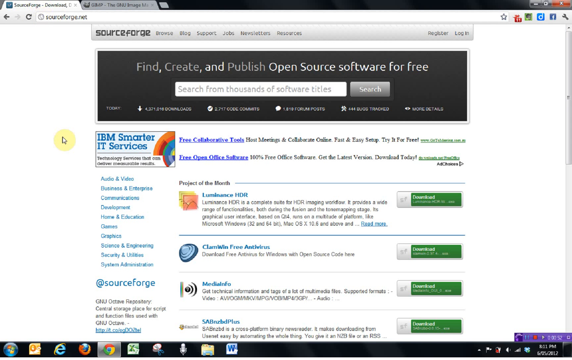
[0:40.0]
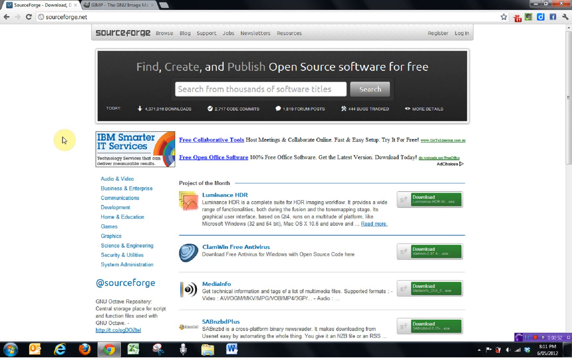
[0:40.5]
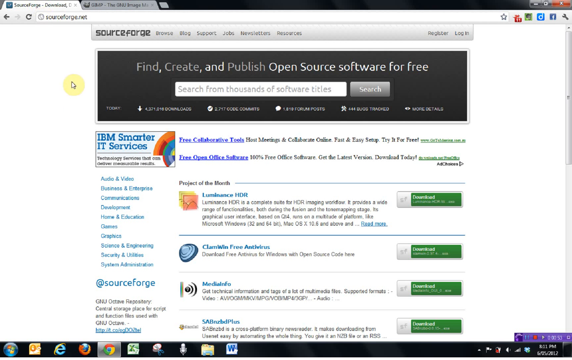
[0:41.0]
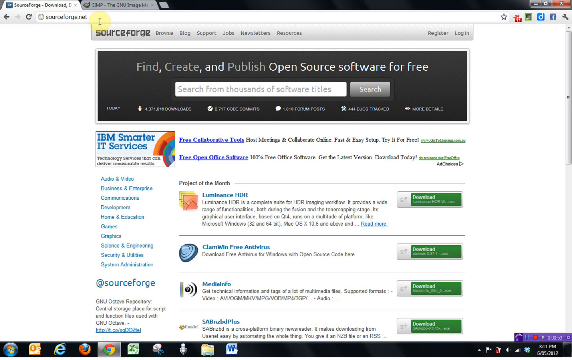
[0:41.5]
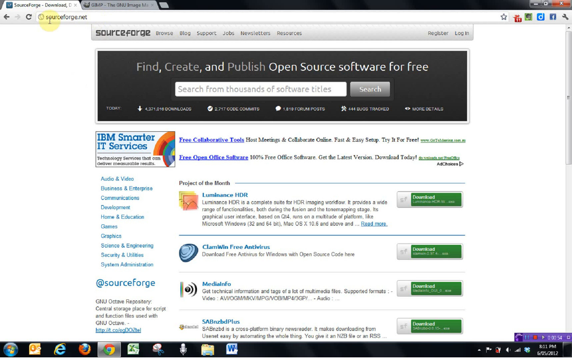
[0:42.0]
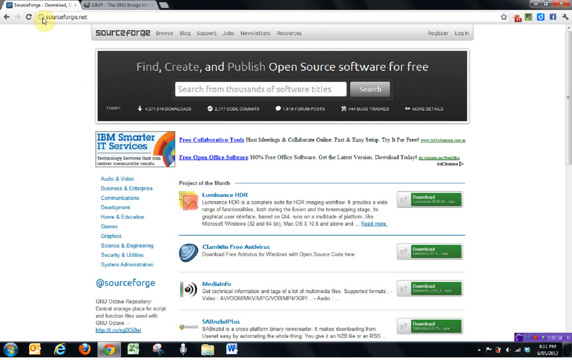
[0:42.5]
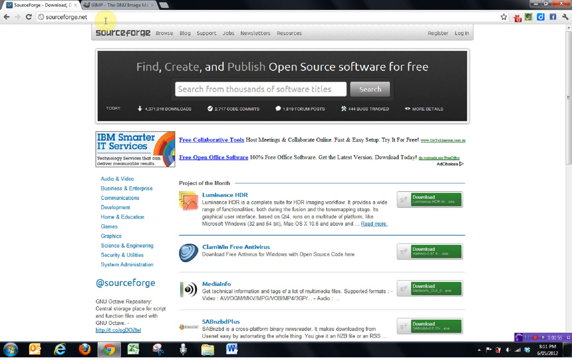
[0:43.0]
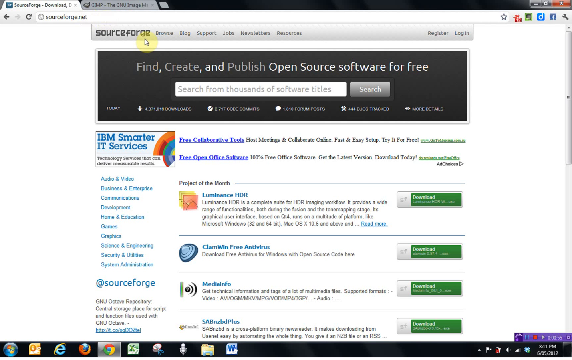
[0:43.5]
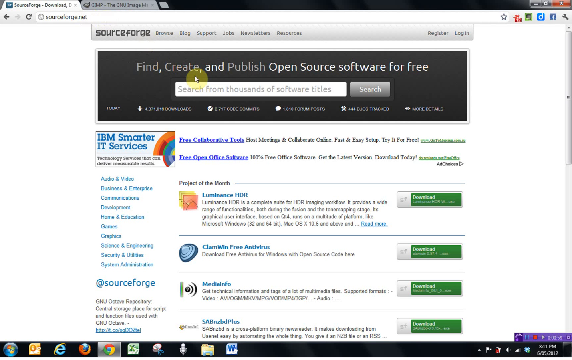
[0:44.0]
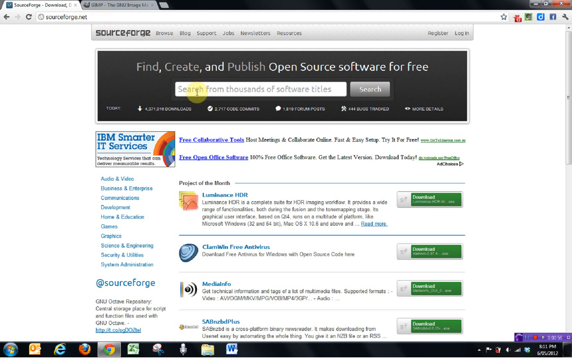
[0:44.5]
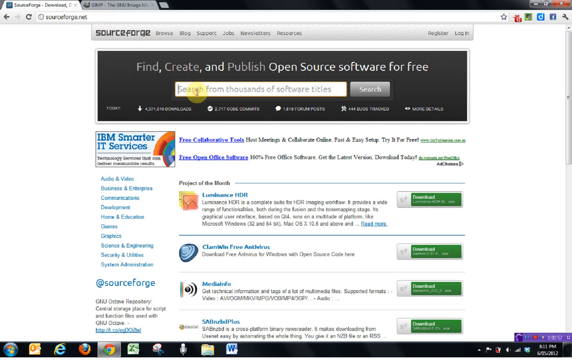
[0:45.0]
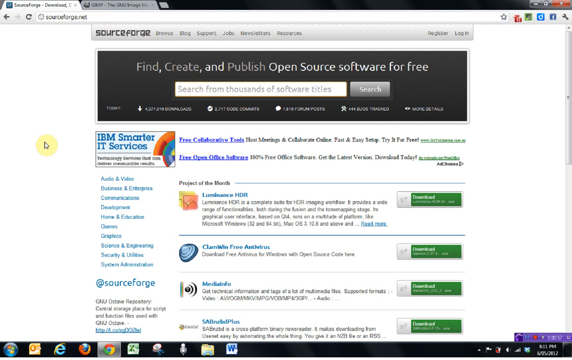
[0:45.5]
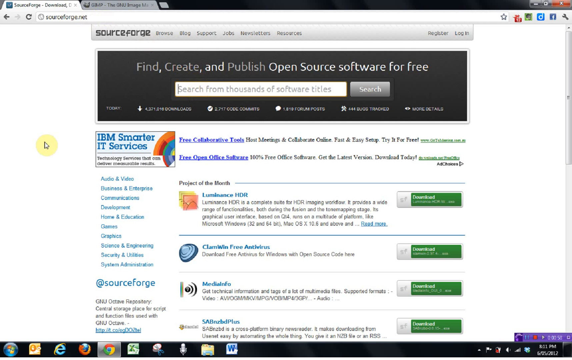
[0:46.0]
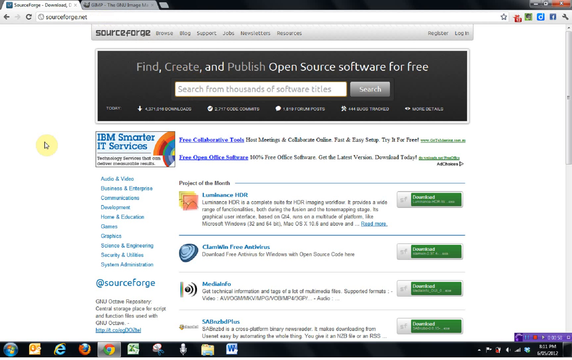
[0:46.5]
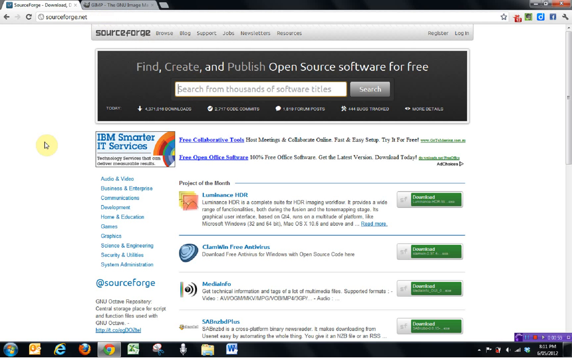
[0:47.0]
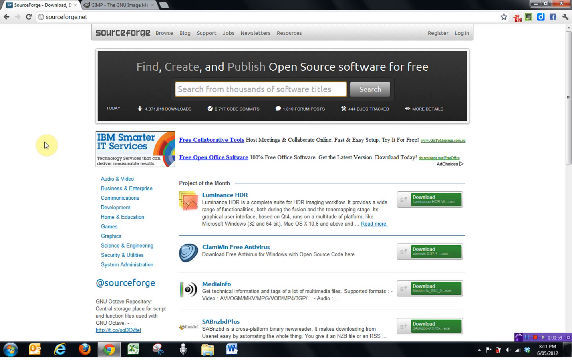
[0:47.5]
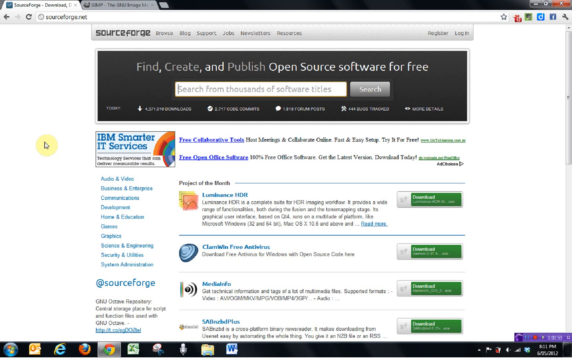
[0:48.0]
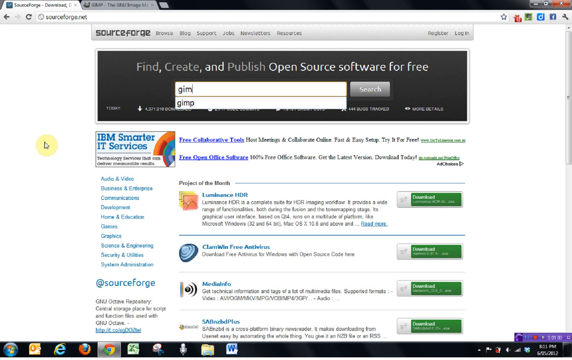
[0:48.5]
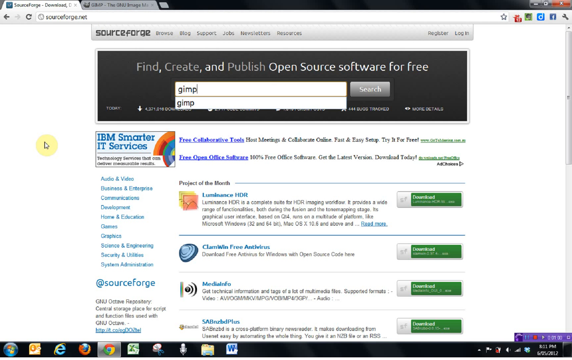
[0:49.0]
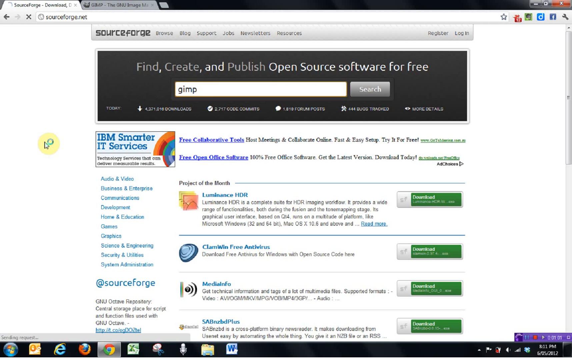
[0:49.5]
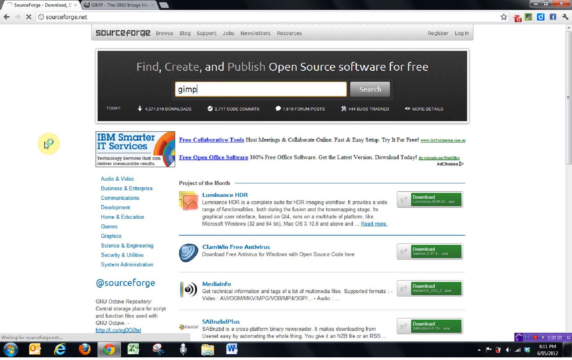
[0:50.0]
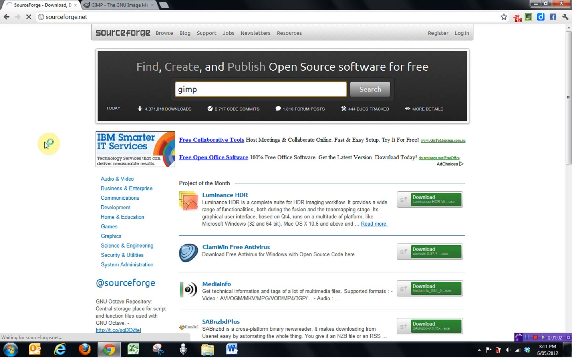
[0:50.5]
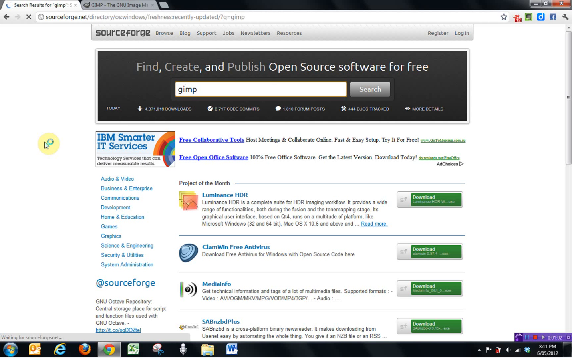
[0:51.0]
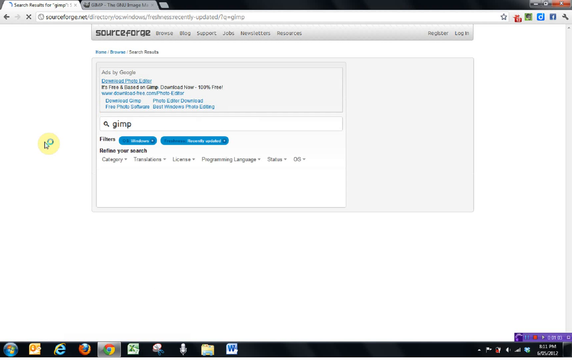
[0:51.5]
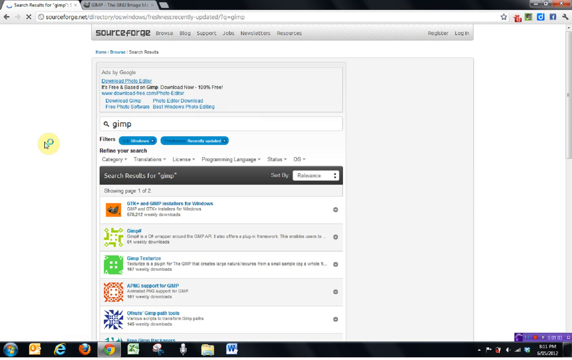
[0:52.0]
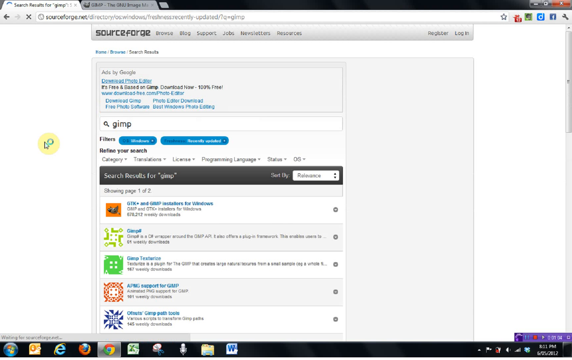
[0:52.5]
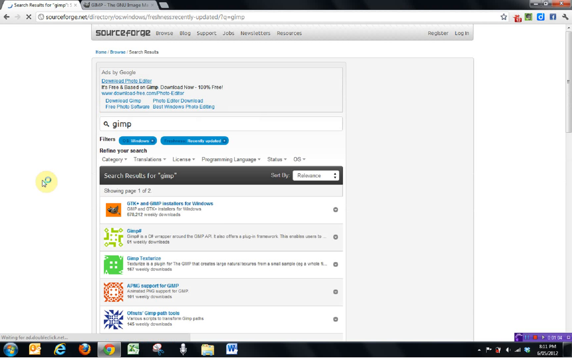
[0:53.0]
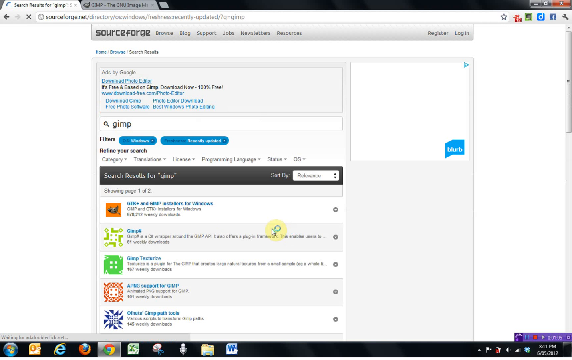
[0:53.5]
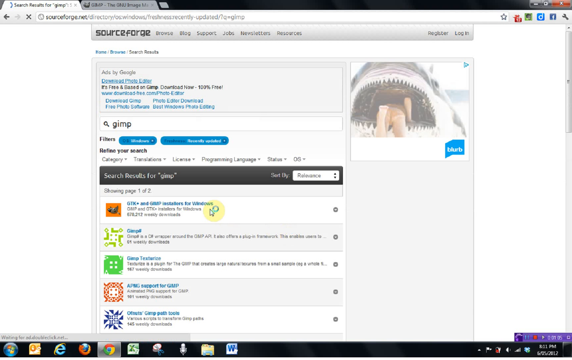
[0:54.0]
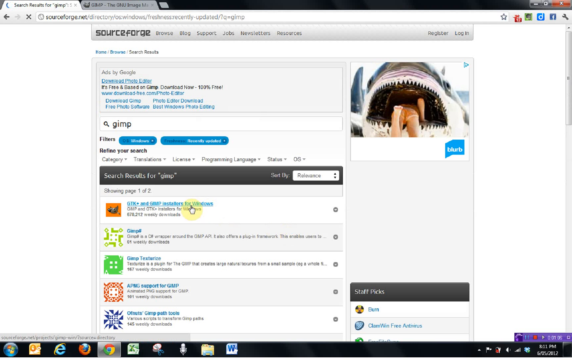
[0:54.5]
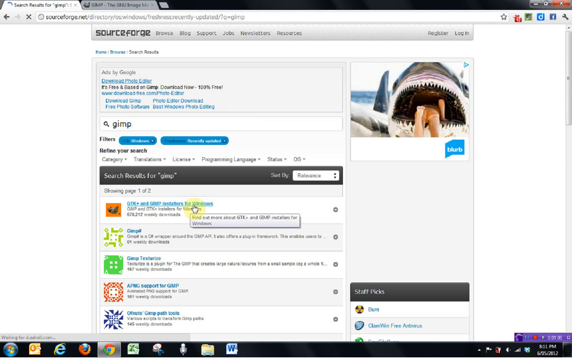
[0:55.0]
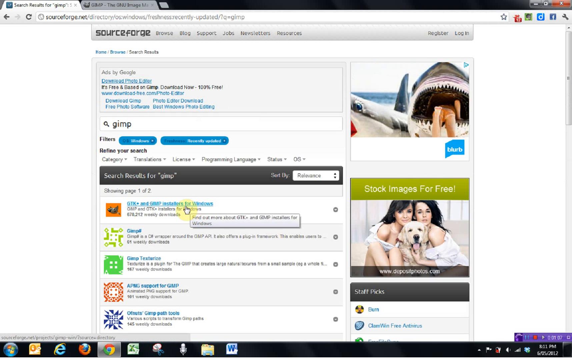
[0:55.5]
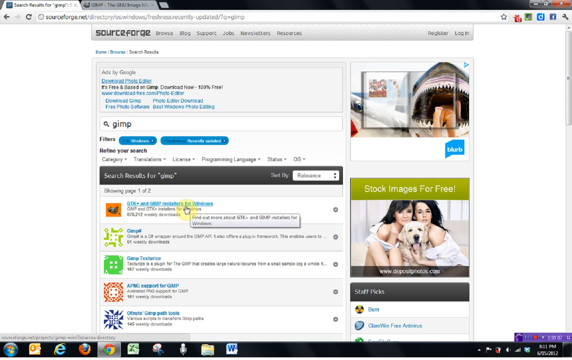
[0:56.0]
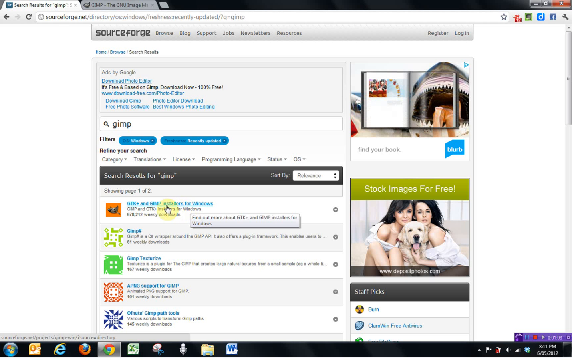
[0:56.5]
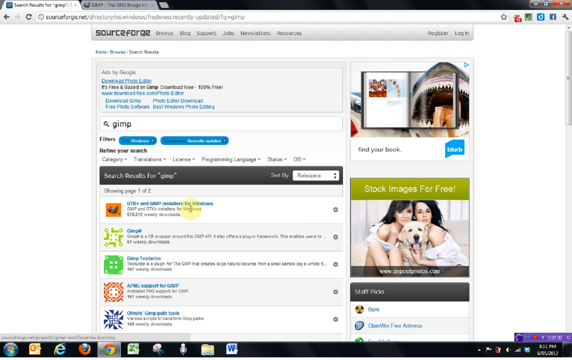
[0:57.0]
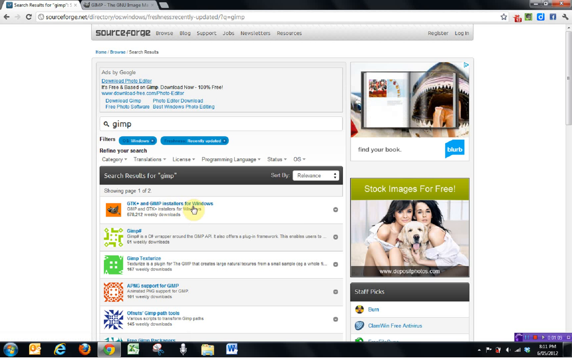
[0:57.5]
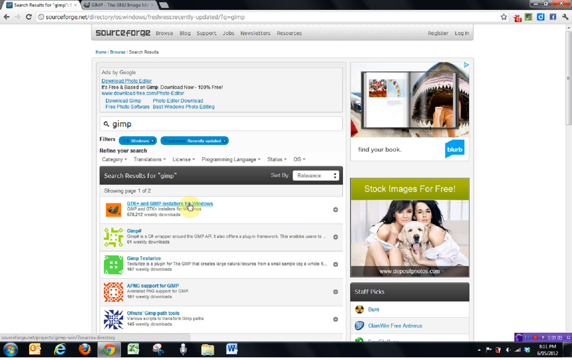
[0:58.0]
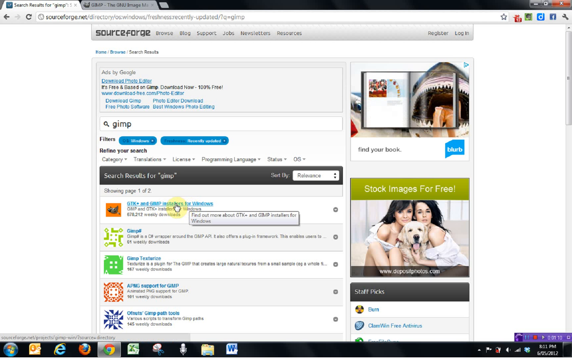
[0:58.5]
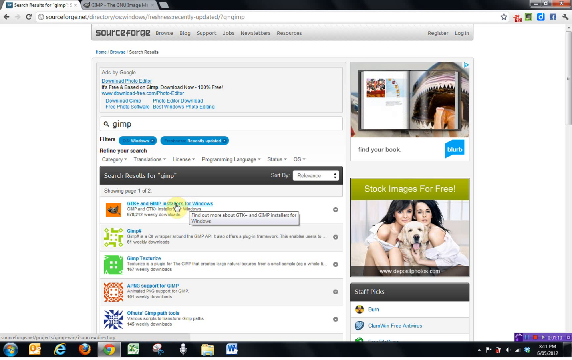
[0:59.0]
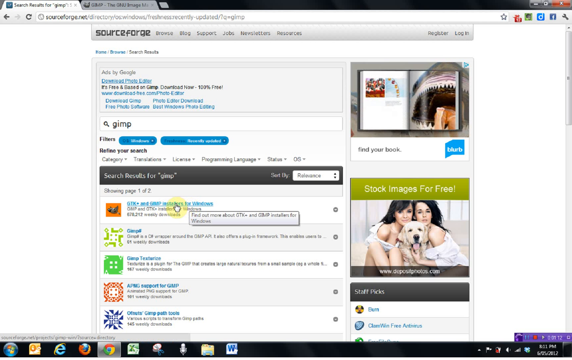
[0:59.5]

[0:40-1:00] The website is SourceForge.net, and its address is shown. The user goes to a search bar at the top, types "GIMP", apparently presses enter, and a results screen comes up. Much of it is too blurry to read, but the first link has an orange icon and appears to read GTK plus GIMP for Windows. The cursor hovers over that link and then clicks it. The sequence walks through searching SourceForge for the GIMP program in order to download it.